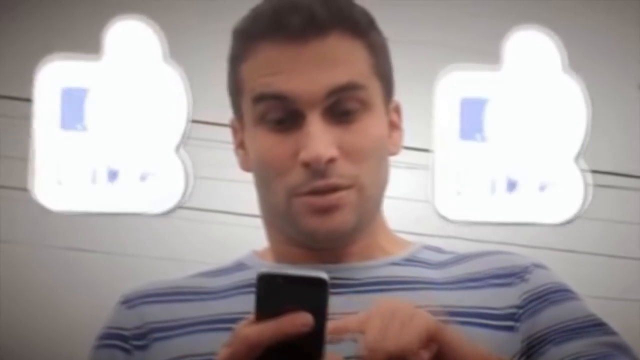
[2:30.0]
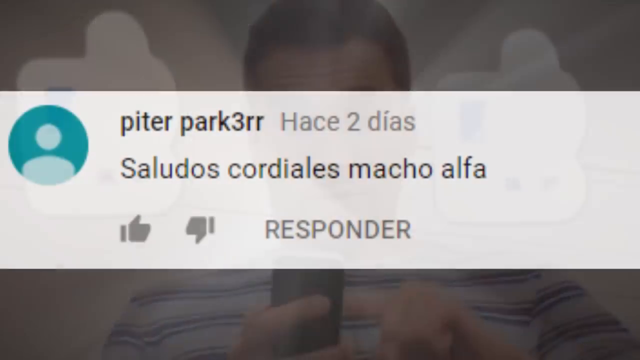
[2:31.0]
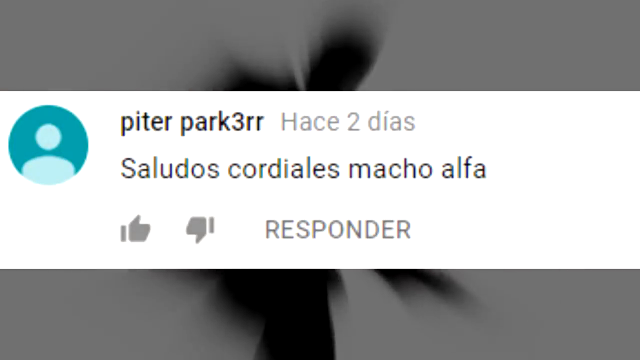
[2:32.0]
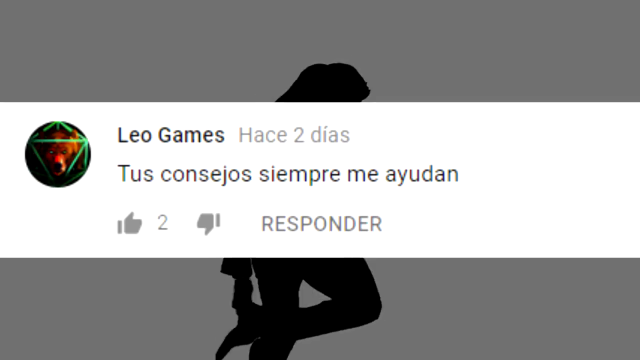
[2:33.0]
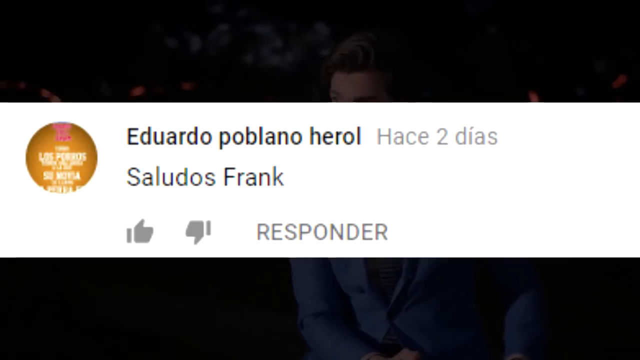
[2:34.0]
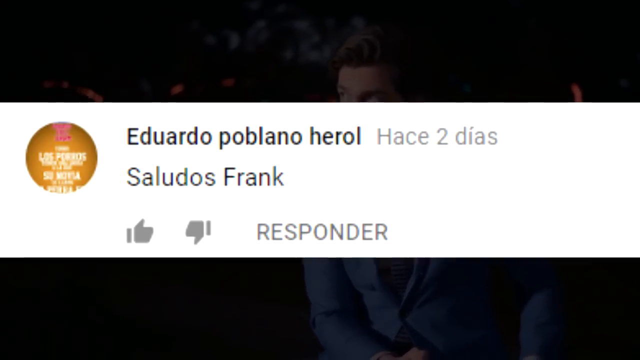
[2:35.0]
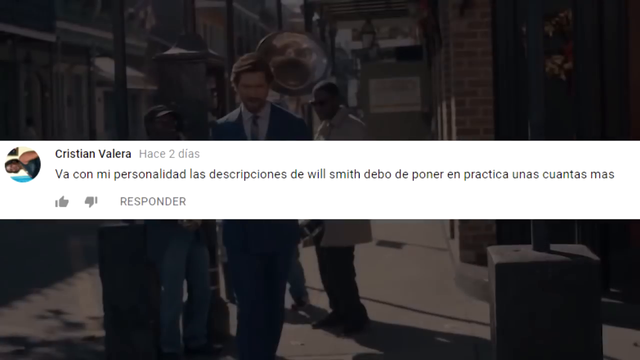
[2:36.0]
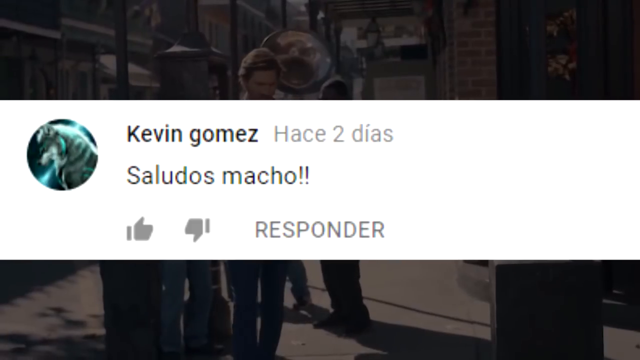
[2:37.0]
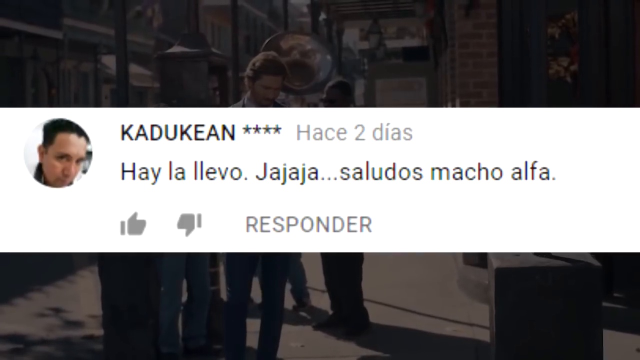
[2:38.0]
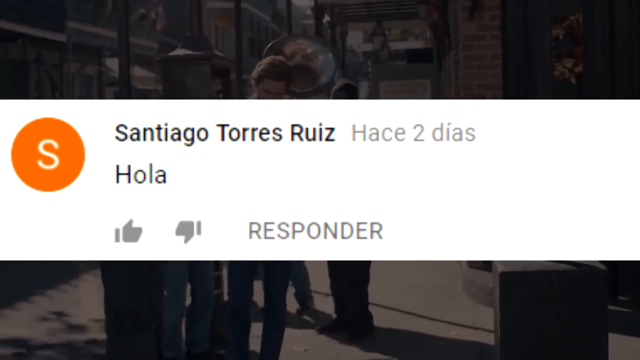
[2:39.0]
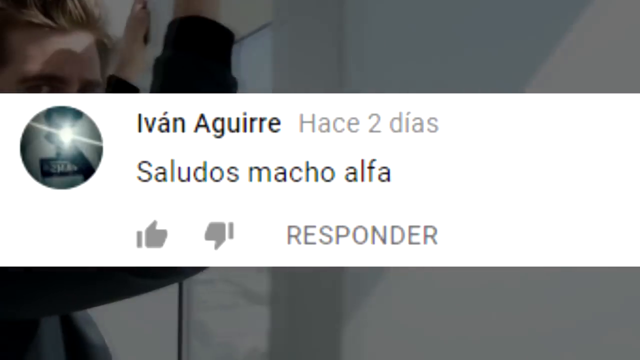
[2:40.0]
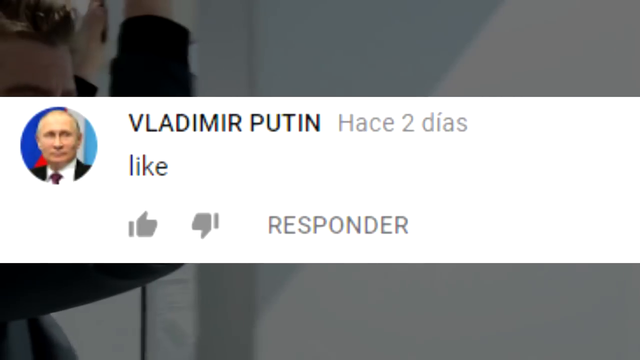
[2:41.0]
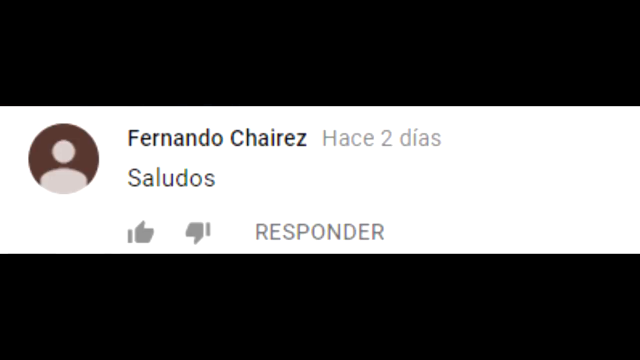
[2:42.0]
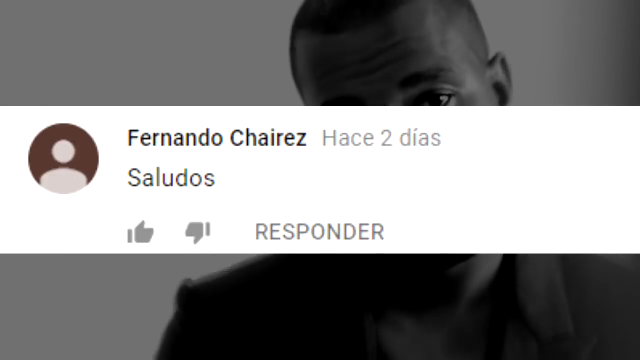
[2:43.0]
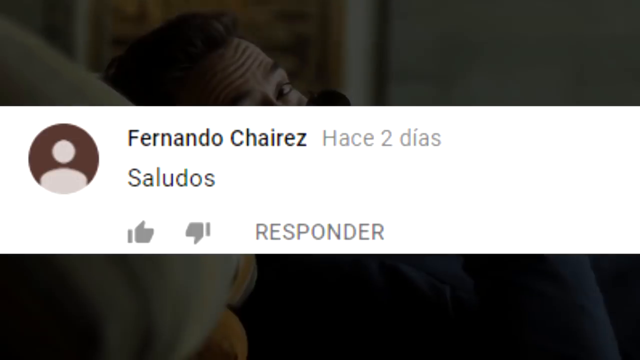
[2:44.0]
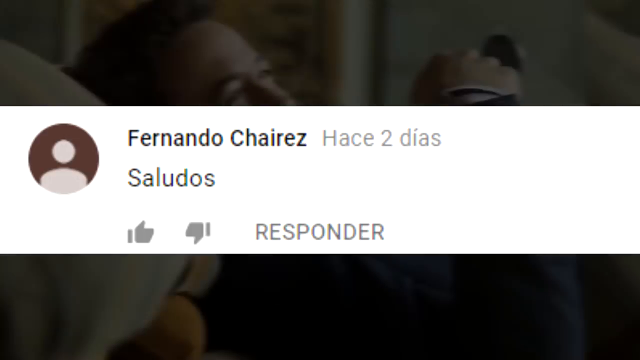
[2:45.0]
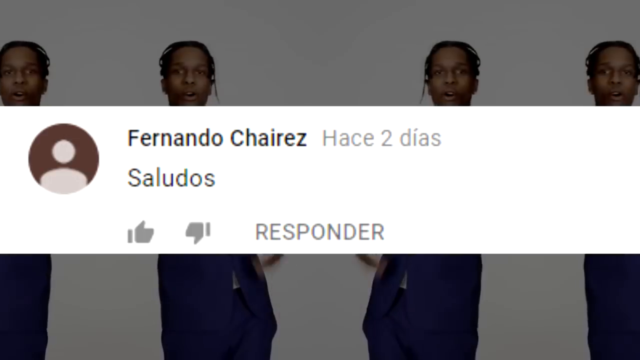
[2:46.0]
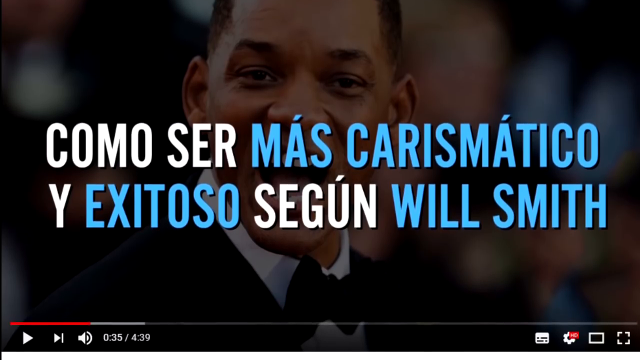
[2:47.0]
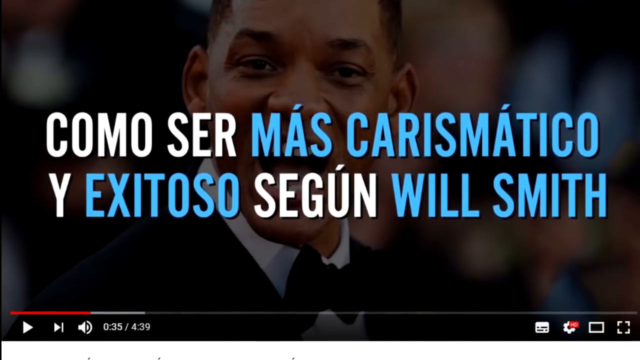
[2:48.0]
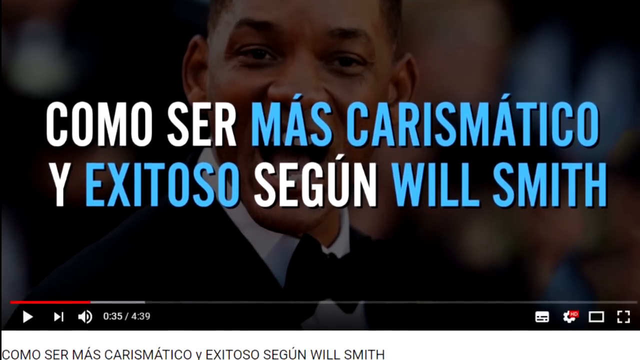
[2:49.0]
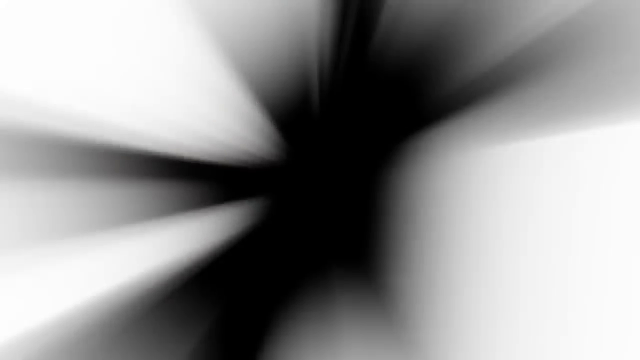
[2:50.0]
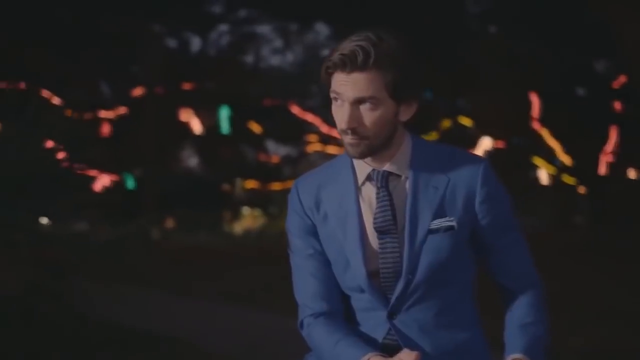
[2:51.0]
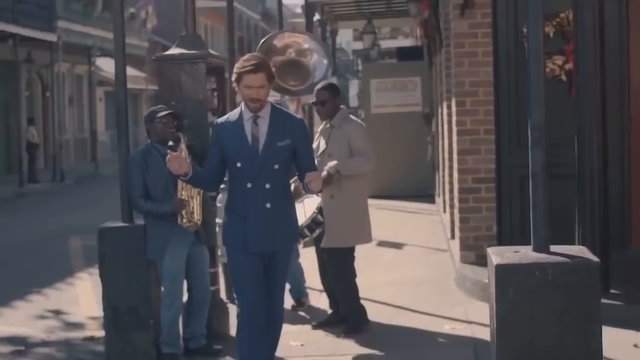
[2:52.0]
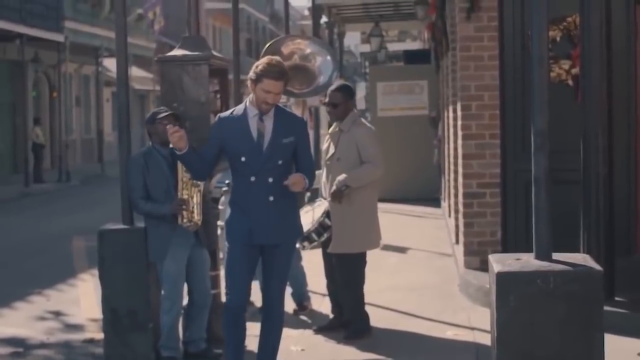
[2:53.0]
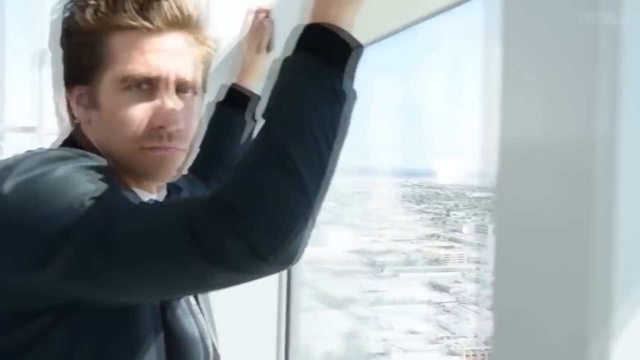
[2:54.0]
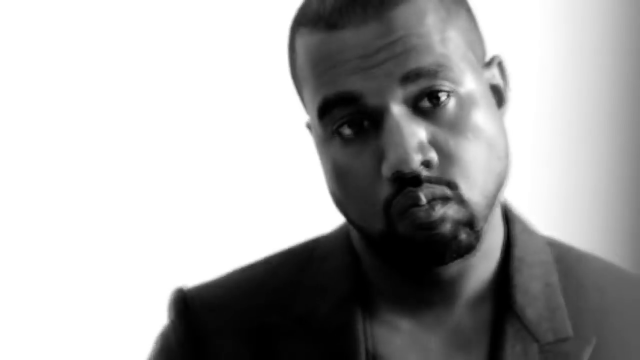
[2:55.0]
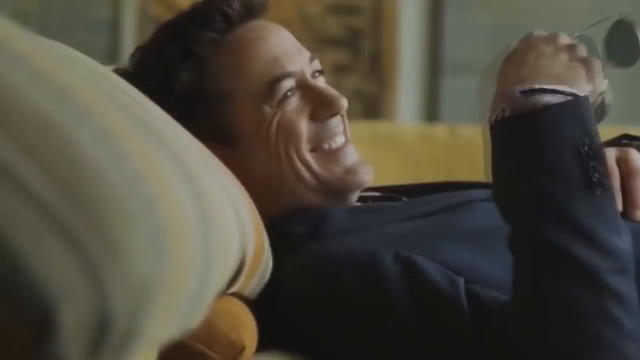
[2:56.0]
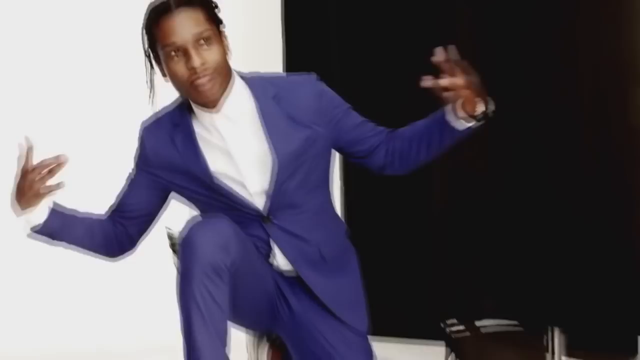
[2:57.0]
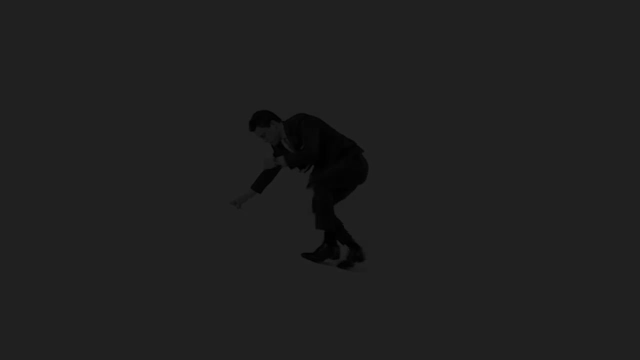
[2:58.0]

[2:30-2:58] An aerial view shows a man, probably in his 30s, wearing a t-shirt, with power lines behind him. He looks intently at his phone, which looks like an old iPhone 6, kind of hitting it really hard with his finger, while on either side of his head two signs are kind of blinking really fast. A comment from a social media site appears, reading "pitter Parker", followed by a comment that is not in English, beginning "Saludos". The video then flashes through a bunch more comments, probably eight or nine, very quickly; they seem to relate to the footage from the very beginning of the man in the blue suit. Some comments have a profile picture of Valdemar Putin, and "Saludos" seems to be a popular word. An image of Will Smith appears with a comment that is not in English written over him. The video then shows the same footage from the very beginning of the man in the blue suit, followed by short clips of Jake Gyllenhaal, Kanye West, Robert Downey Jr., and another young rapper.